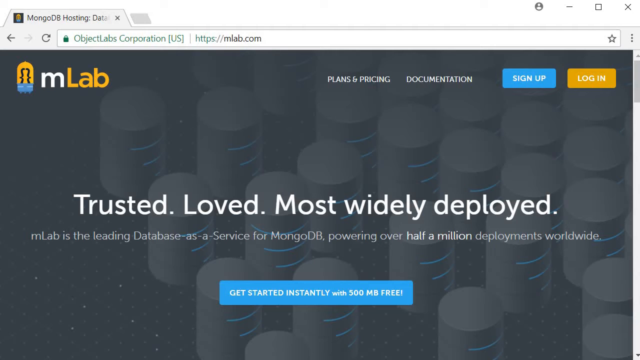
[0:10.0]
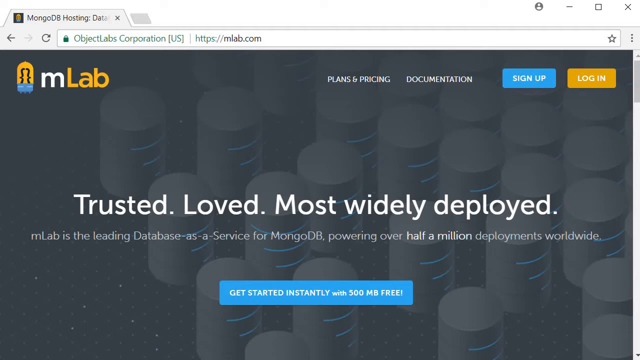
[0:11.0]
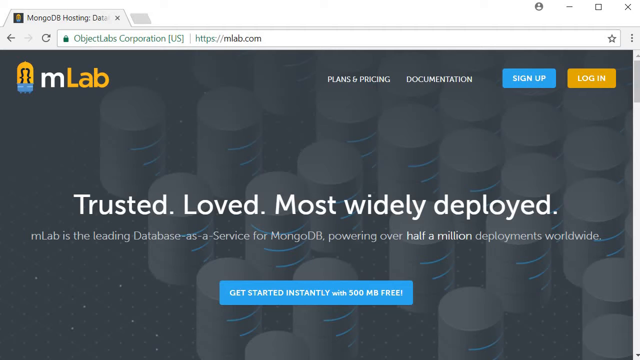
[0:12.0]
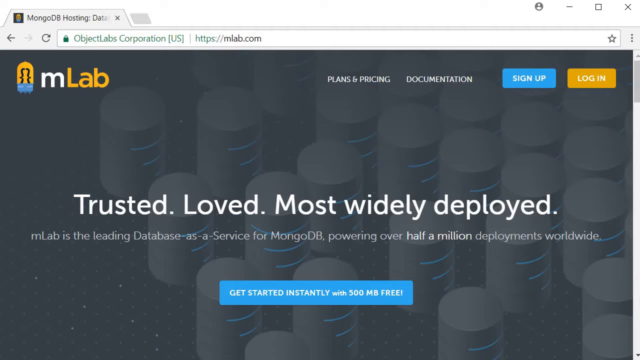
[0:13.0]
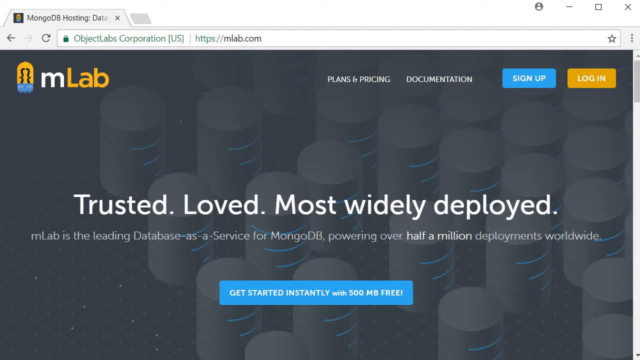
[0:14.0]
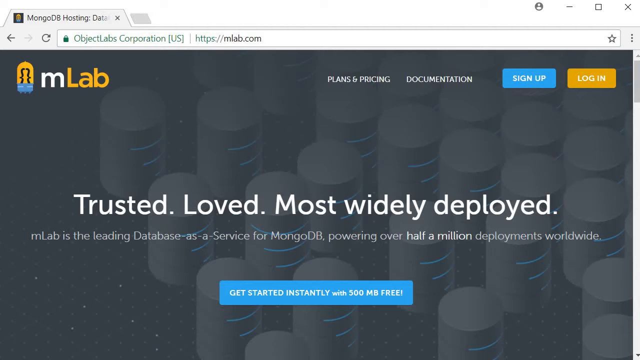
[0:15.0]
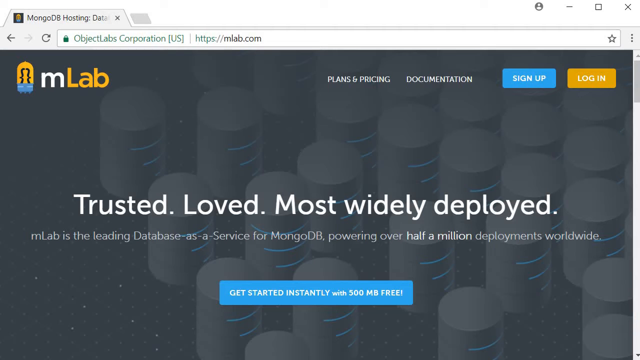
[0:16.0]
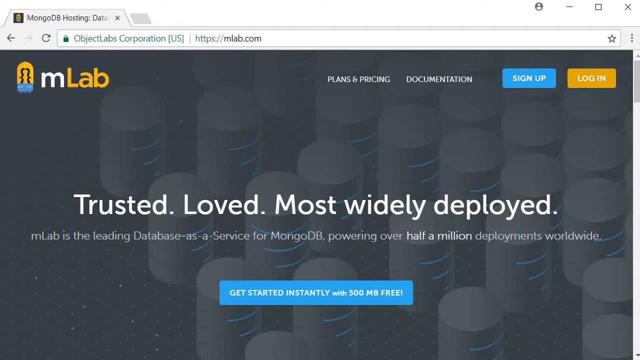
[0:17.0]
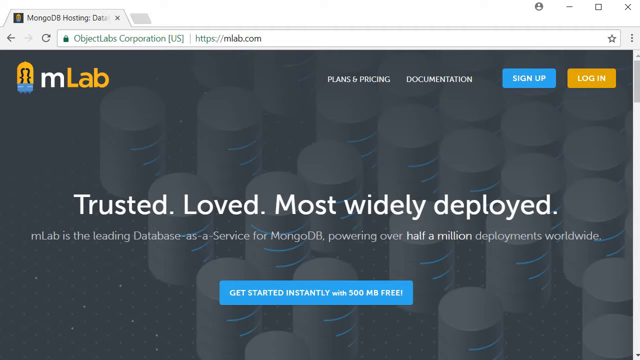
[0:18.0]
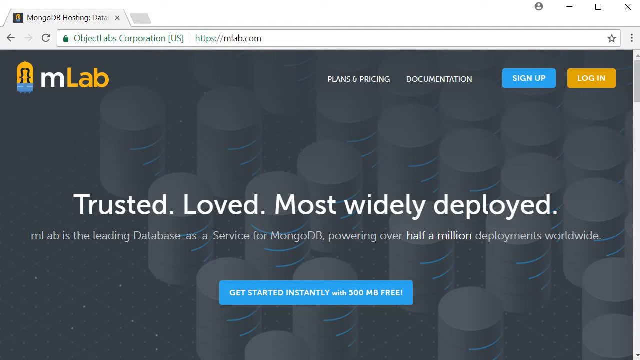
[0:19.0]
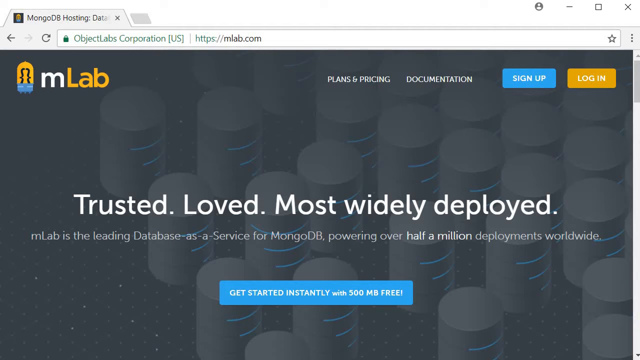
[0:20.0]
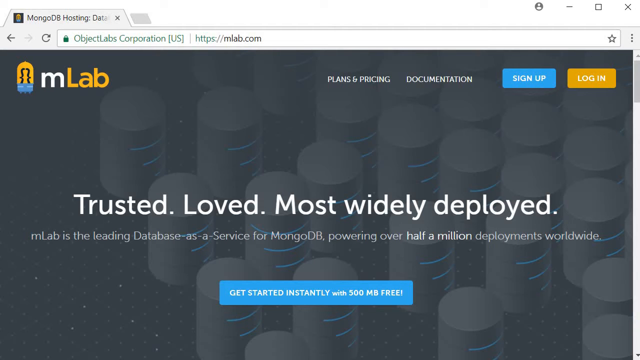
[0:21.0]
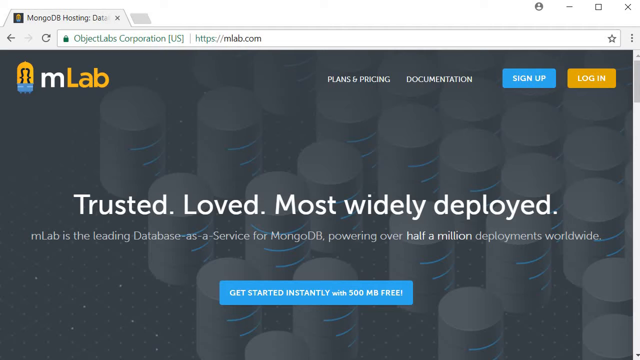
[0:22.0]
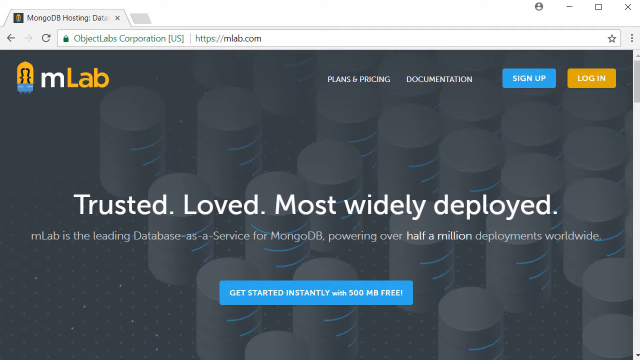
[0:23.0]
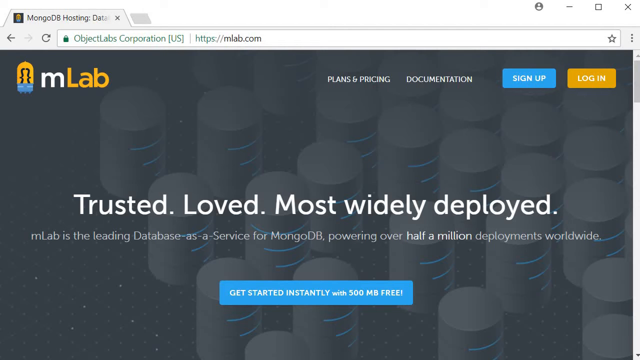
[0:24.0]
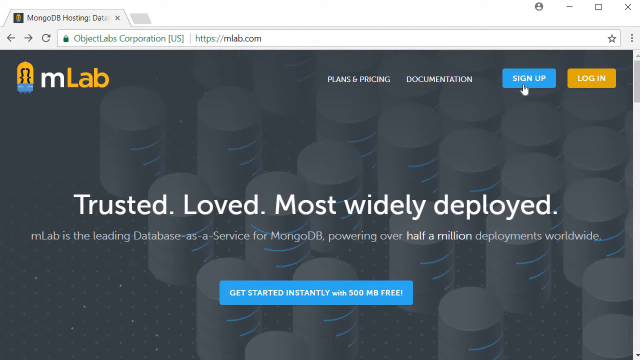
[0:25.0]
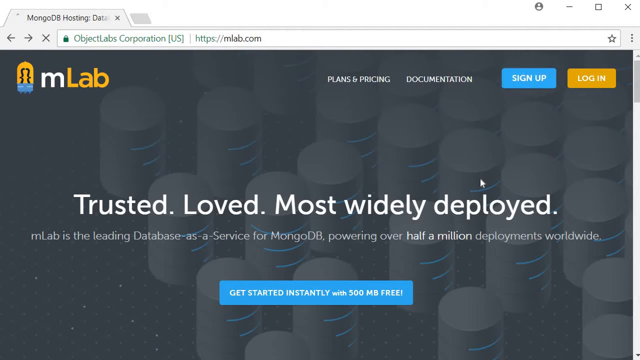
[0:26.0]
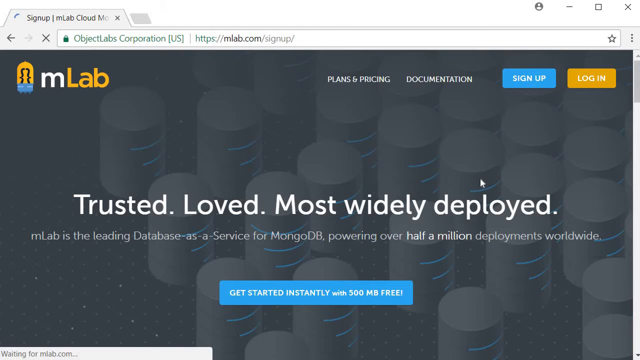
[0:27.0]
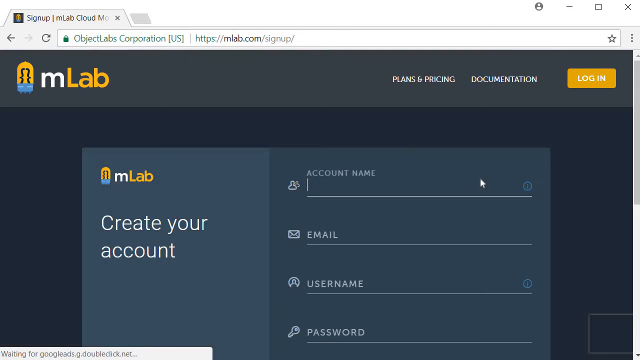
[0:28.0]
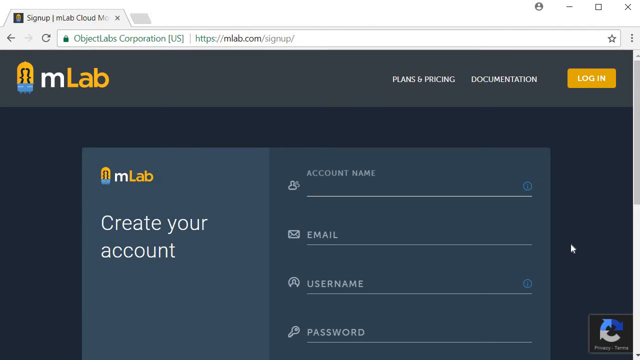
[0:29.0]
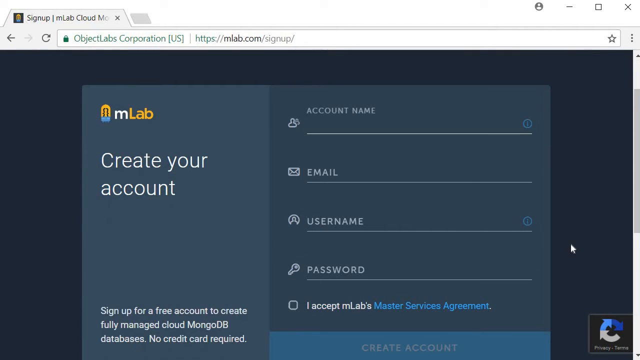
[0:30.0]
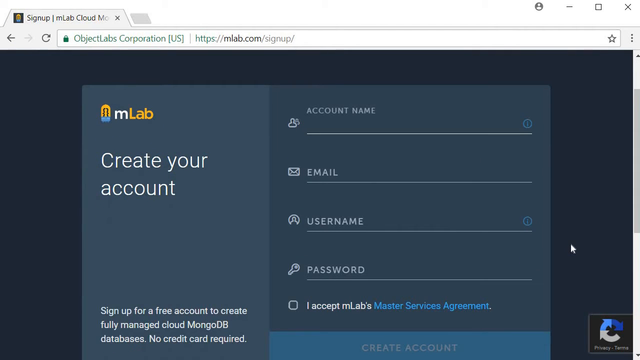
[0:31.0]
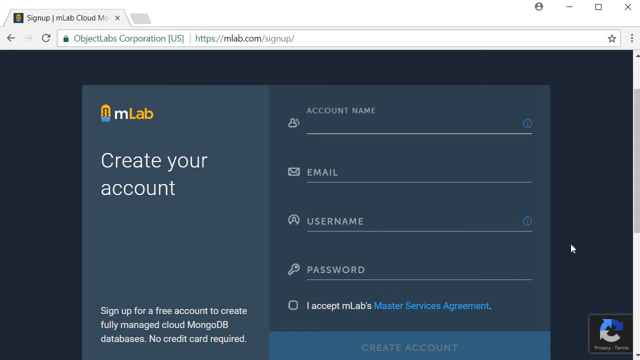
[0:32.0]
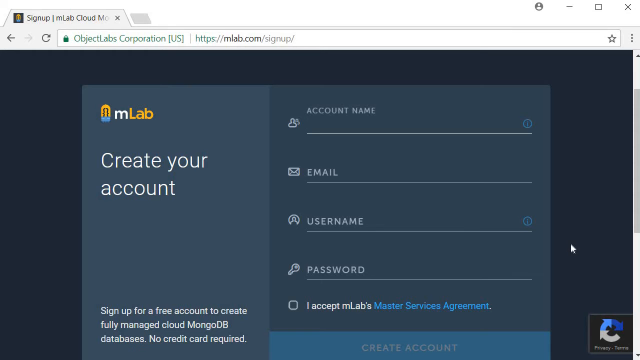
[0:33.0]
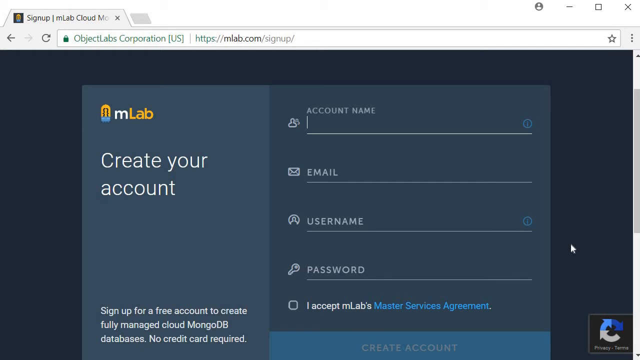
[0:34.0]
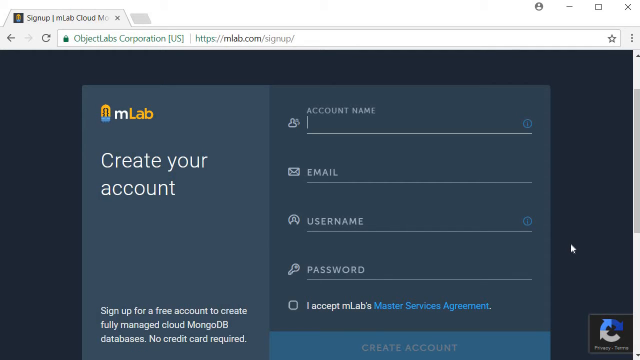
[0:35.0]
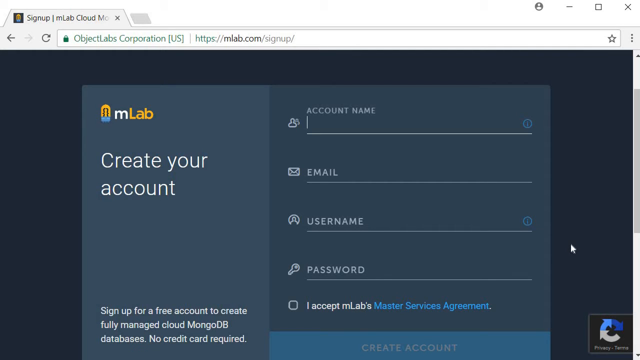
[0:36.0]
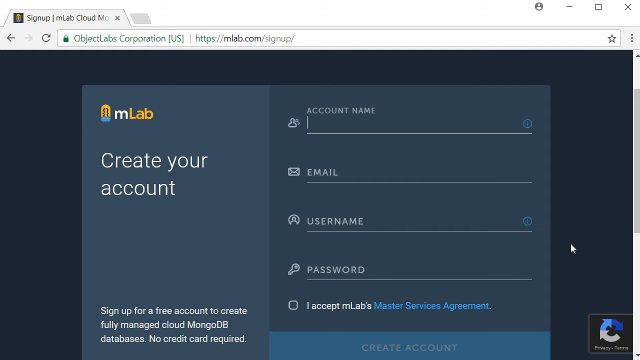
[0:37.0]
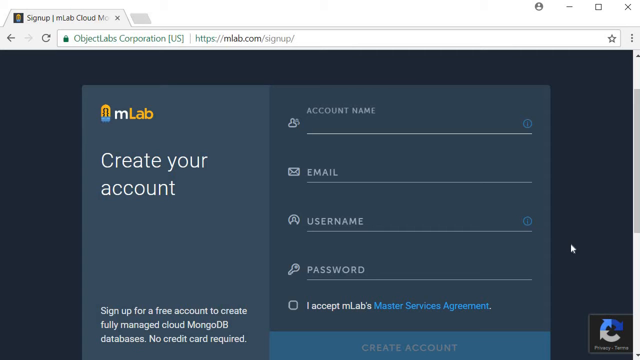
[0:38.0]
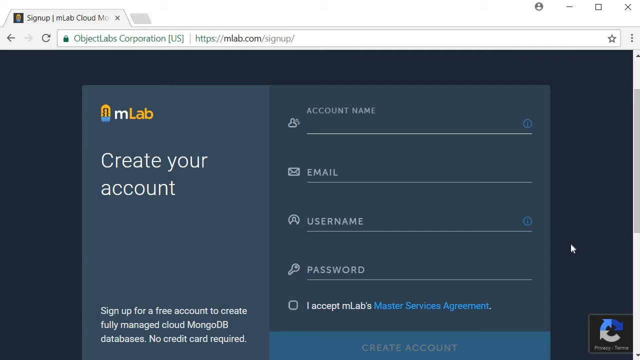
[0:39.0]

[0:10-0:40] A website is open in a browser on a computer. The single open tab at the top of the screen reads "MongoDB Hosting". In the URL field, the site is named "OpticLabs Corporation [US]", followed by the URL "https://mlab.com." The page background is dark gray with randomly distributed lighter gray cylinders that have blue lines on them. In the upper left corner is the MLab logo, a white lowercase m followed by an uppercase "lab" in yellow, with a stylized light bulb to the left of it. In the middle of the screen, white text reads "Trusted, Loved, Most Widely Deployed." Beneath it is a blue button with the text "Get Started Instantly with 500 MB free." In the upper right corner are two buttons: a blue one reading "Sign Up" and a yellow one reading "Log In". The screen stays still for a moment, then the cursor selects the "Sign Up" button in the upper right. The screen changes to a Create Your Account page with a dark blue background and a square in the middle in two shades of light gray. The words "Create Your Account" are on the left, and several fields are on the right. From top to bottom they read "Account Name", "Email", "Username" and "Password", followed by a checkbox with the phrase "I accept MLabs Master Services Agreement". The view holds steady on this screen, moving a little up and a little down.